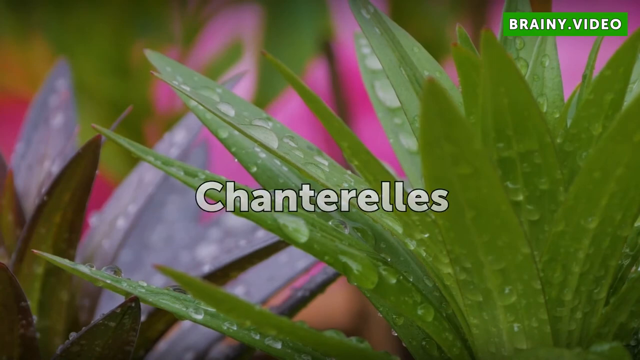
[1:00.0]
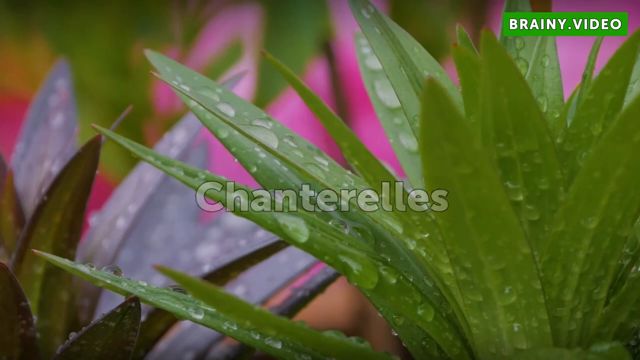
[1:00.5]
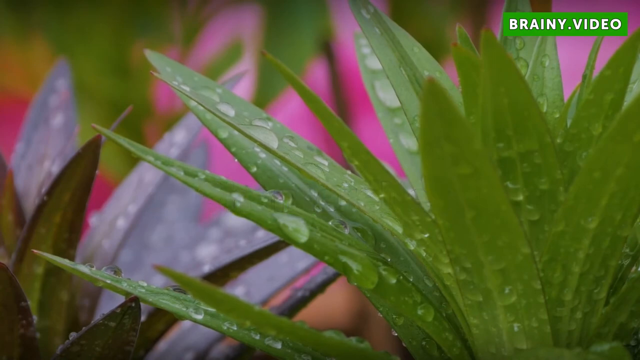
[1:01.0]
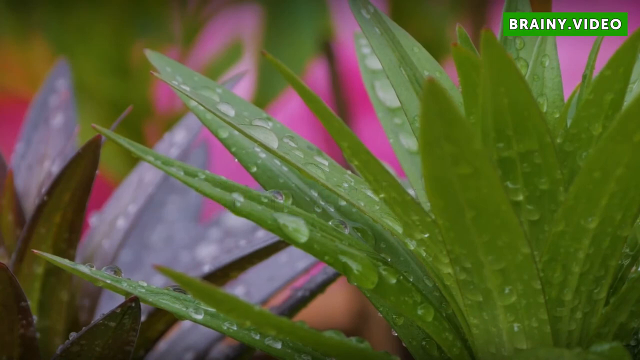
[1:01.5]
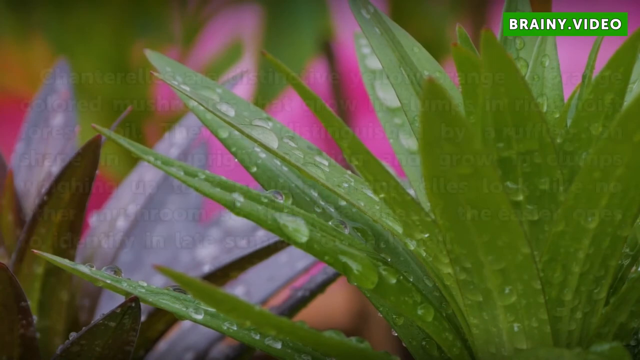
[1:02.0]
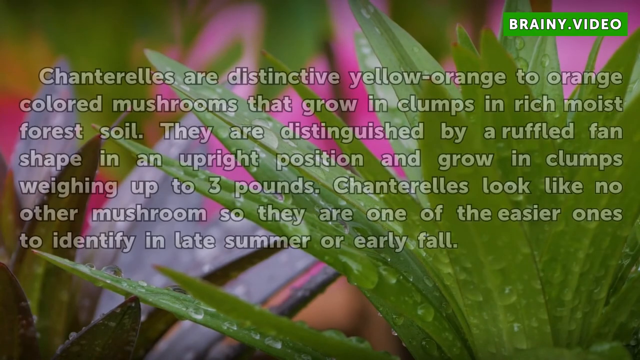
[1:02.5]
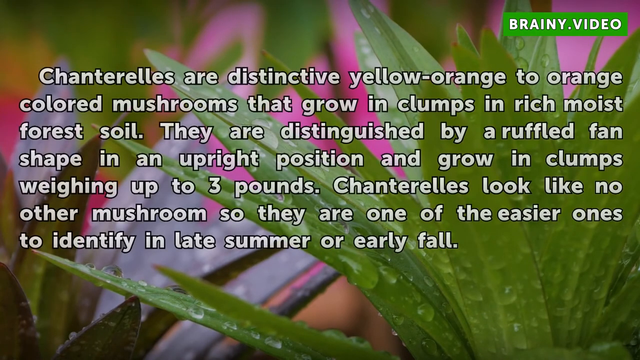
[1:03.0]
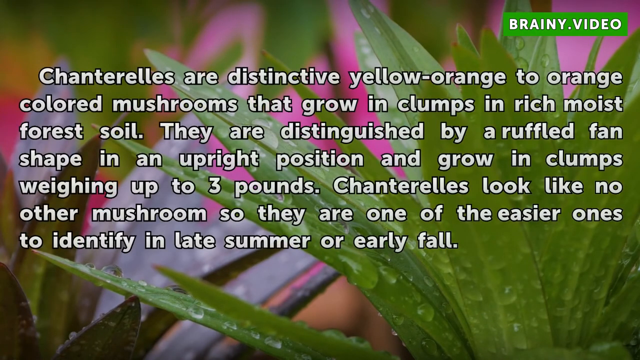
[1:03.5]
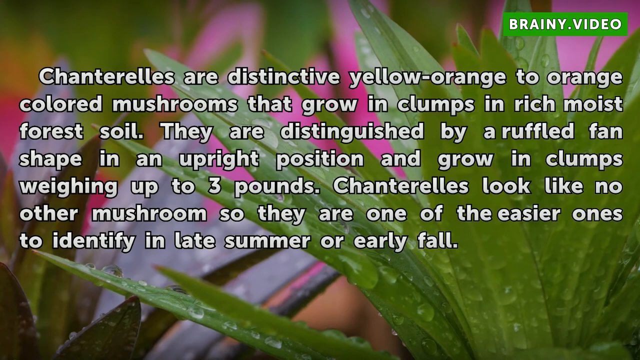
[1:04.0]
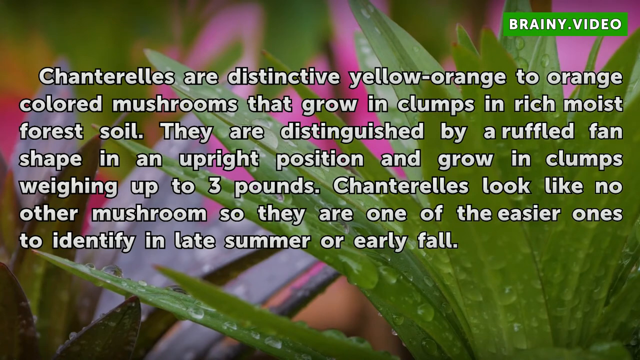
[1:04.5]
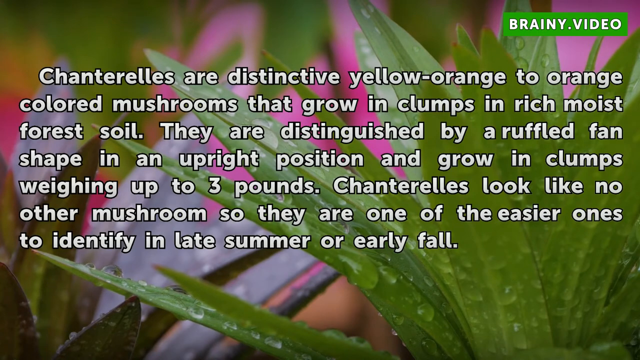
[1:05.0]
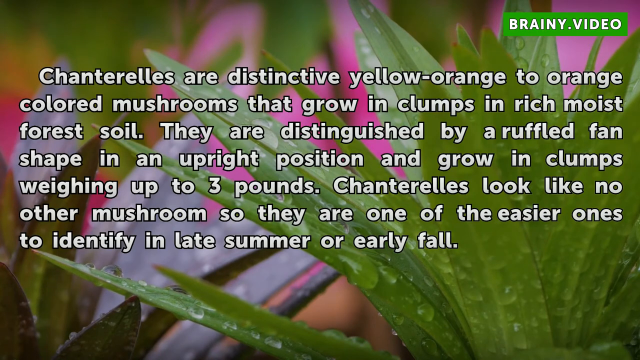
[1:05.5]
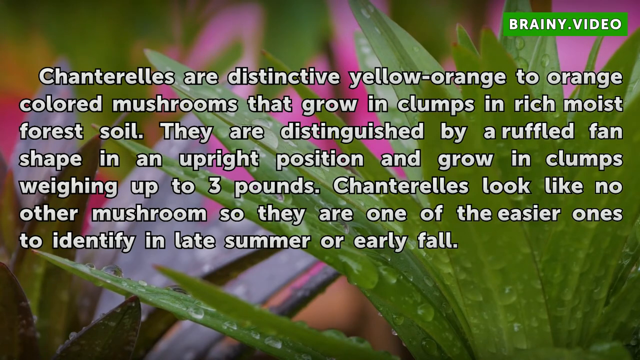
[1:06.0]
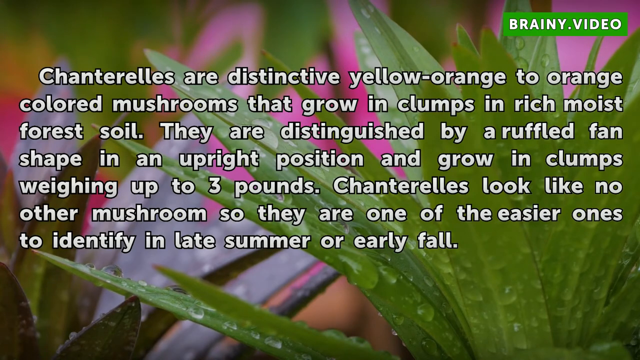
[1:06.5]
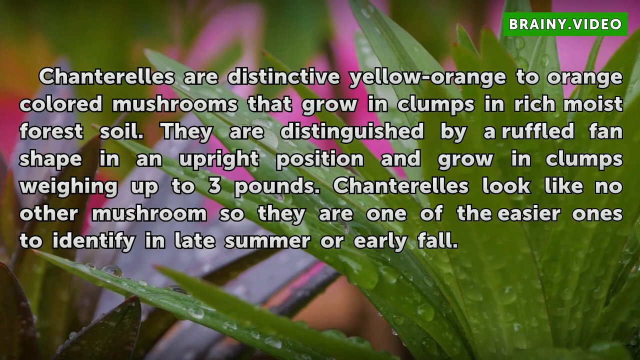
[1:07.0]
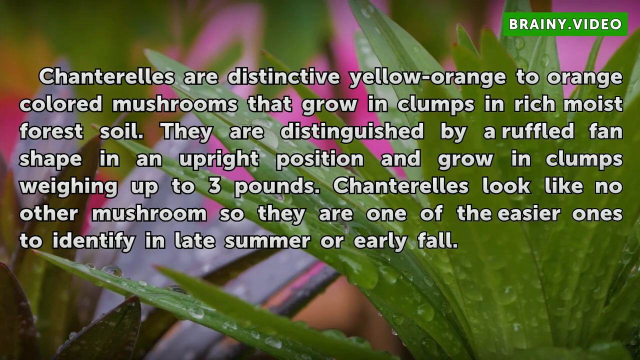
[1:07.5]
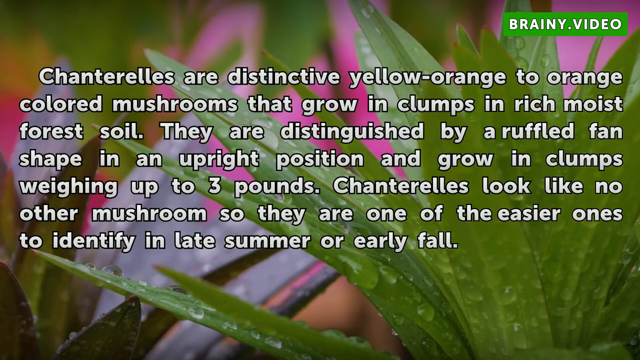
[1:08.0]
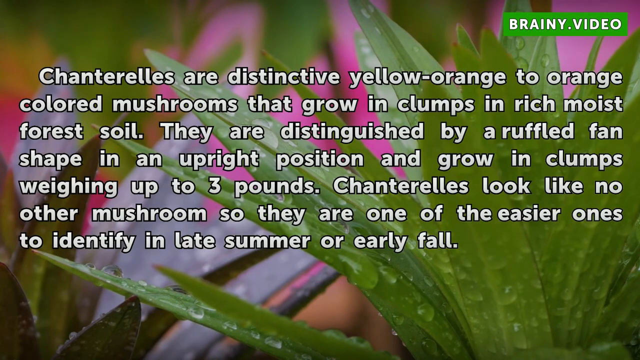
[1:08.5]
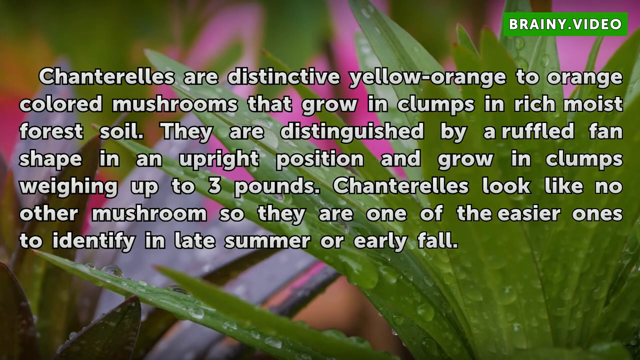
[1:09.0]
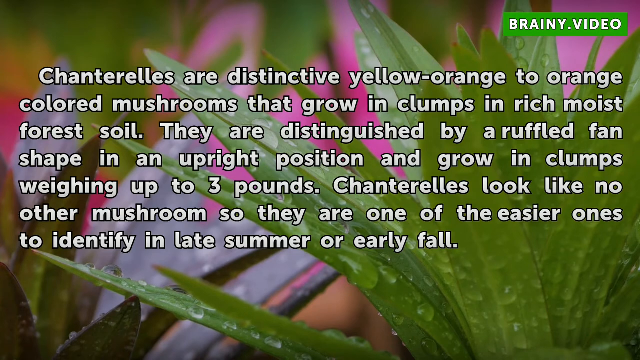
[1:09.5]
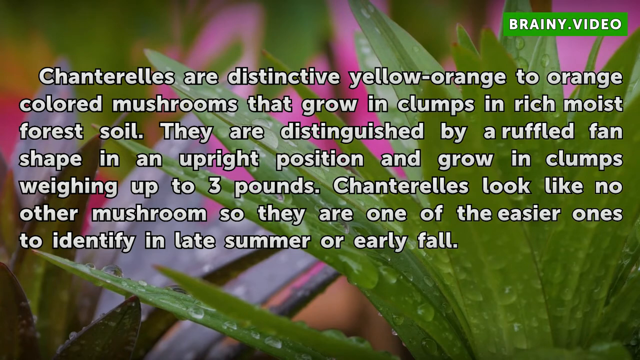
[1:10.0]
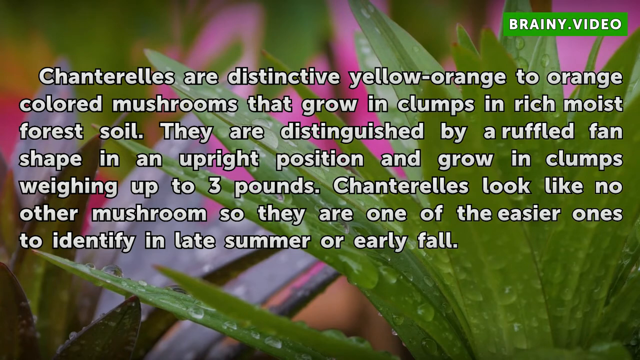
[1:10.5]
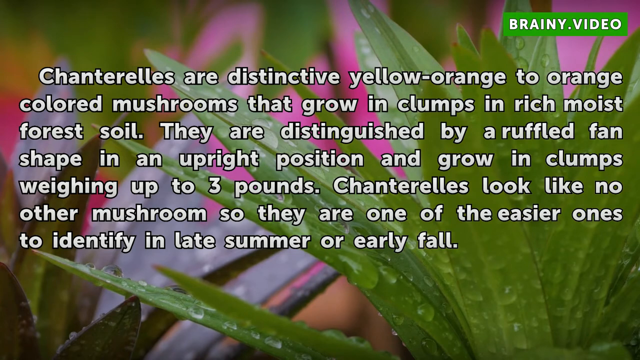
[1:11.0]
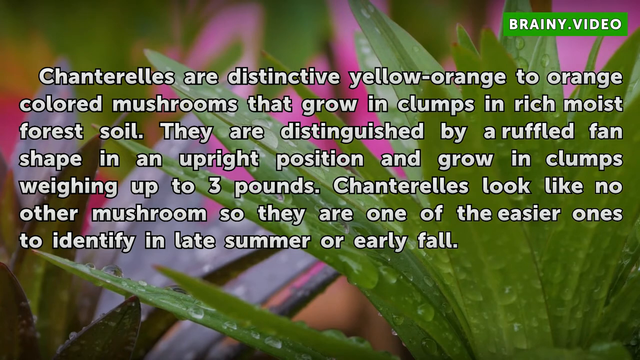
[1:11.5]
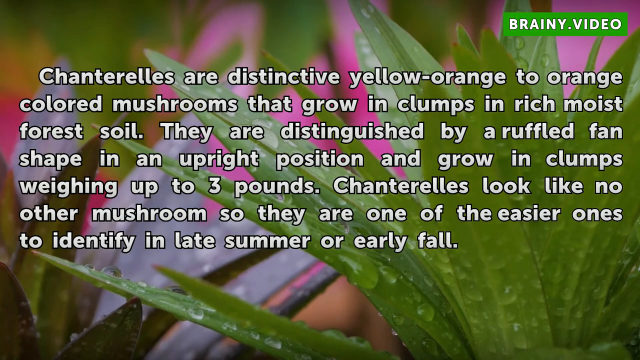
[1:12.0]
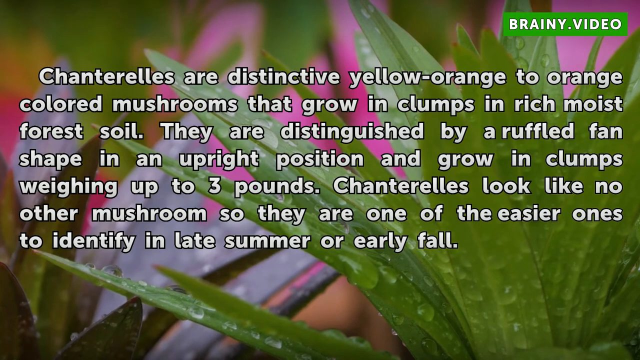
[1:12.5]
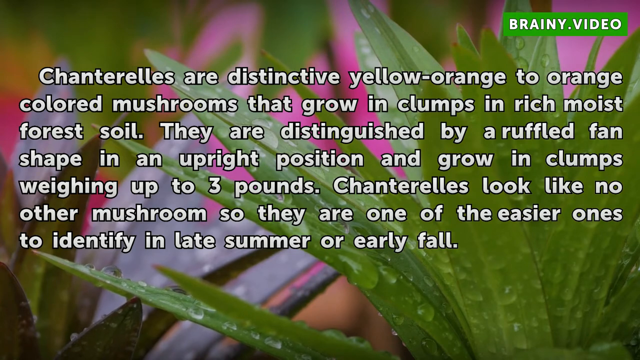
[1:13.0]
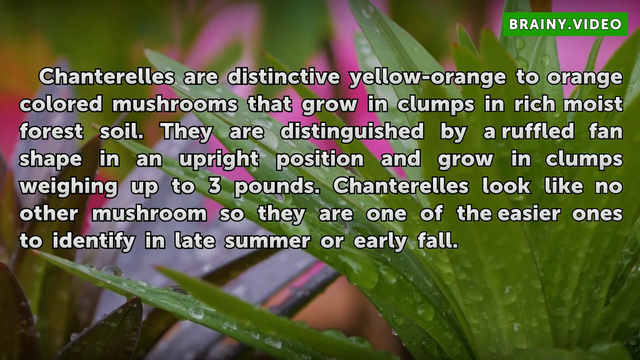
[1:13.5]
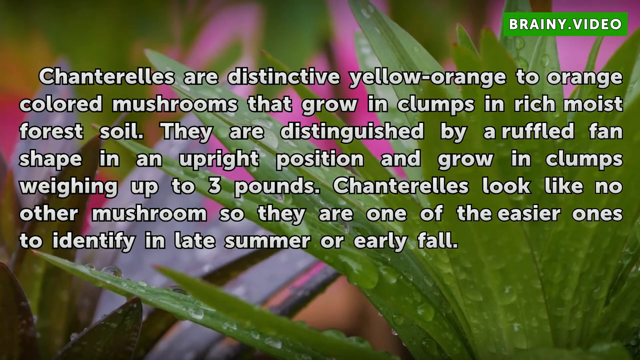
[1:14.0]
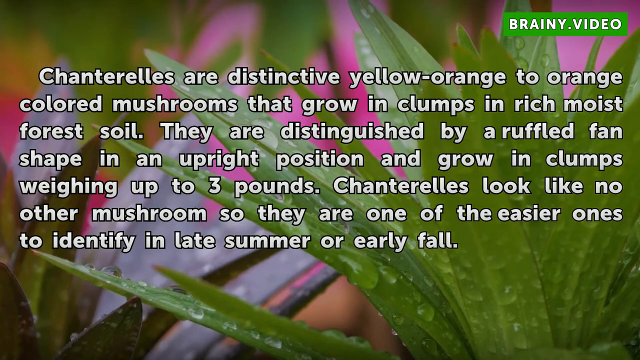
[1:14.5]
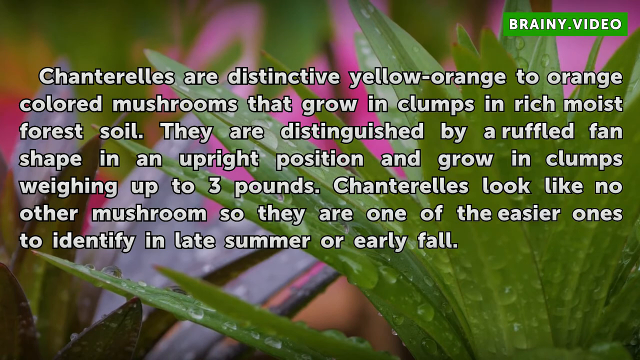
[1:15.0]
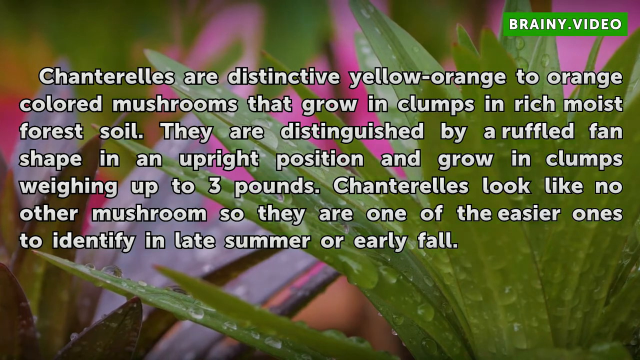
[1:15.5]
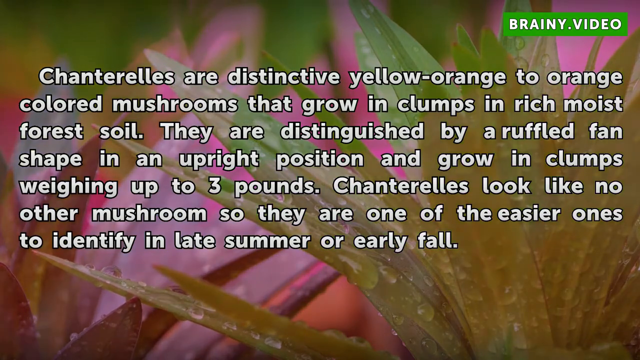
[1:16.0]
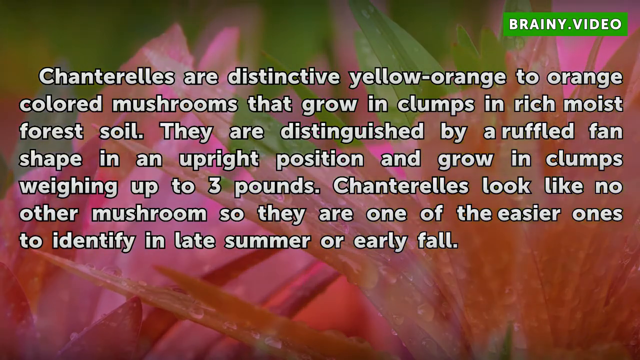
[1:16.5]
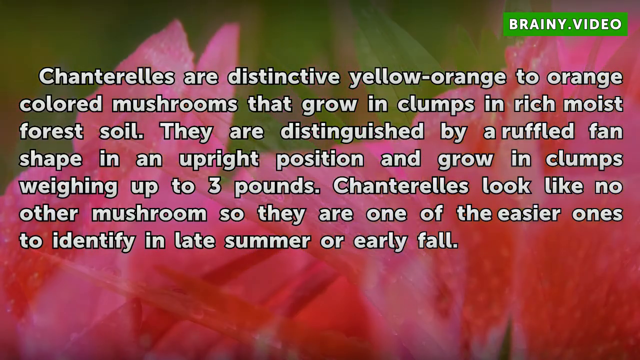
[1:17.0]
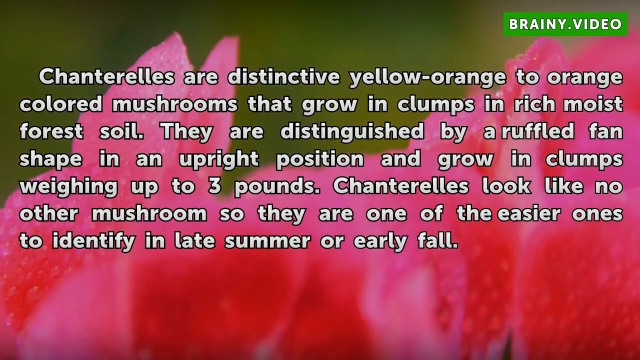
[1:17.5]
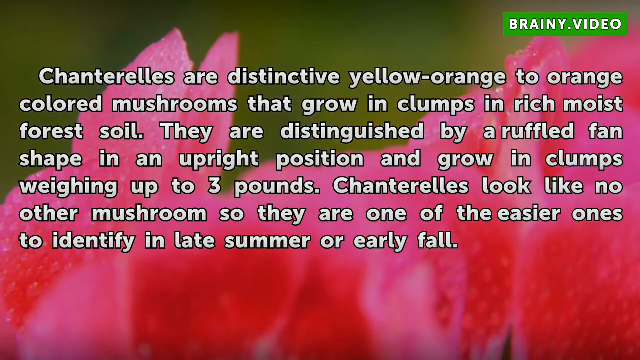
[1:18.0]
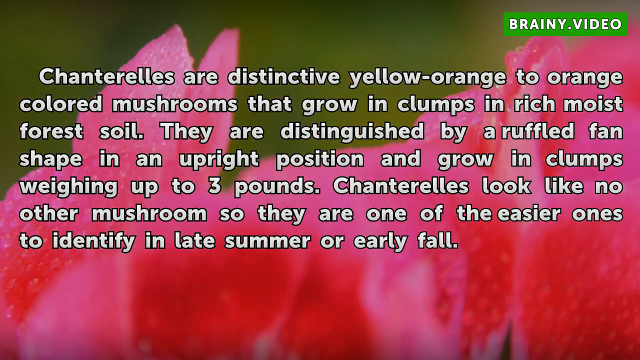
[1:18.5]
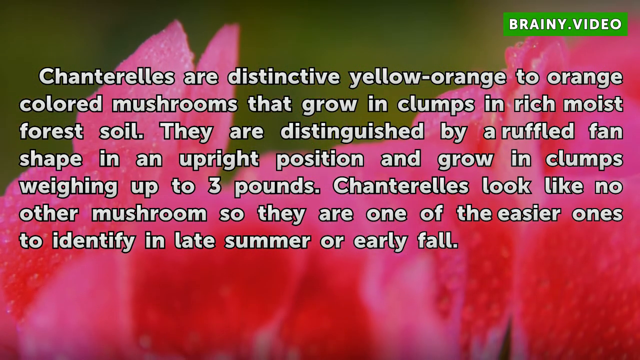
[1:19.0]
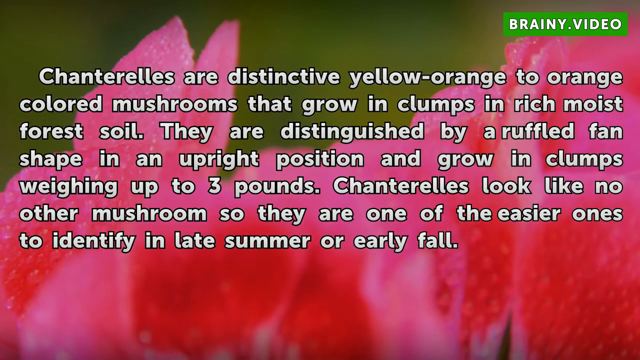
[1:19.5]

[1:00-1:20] The background image shows what look like aloe plants with thick water droplets all over their leaves. The word on the screen says "chanterelles," and then a block of text describing chanterelles appears: "chanterelles are distinctive yellow-orange to orange-colored mushrooms that grow in clumps in rich, moist forest soil. They are distinguished by a ruffled fan shape in an upright position and growing clumps weighing up to three pounds. Chanterelles look like no other mushroom, so they are one of the easier ones to identify in late summer or early fall." The background then changes to a pink flower, its petals visible behind the white text about chanterelles.